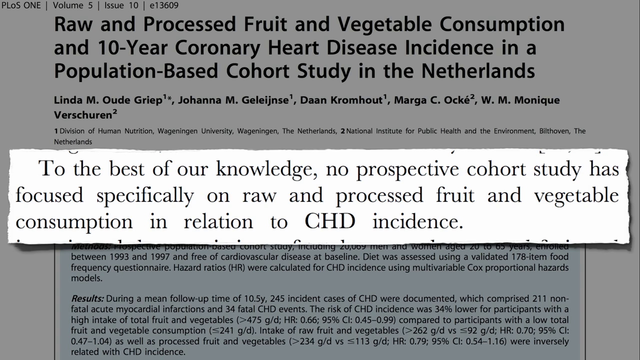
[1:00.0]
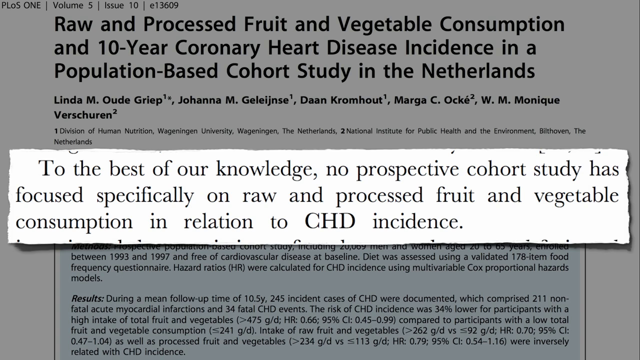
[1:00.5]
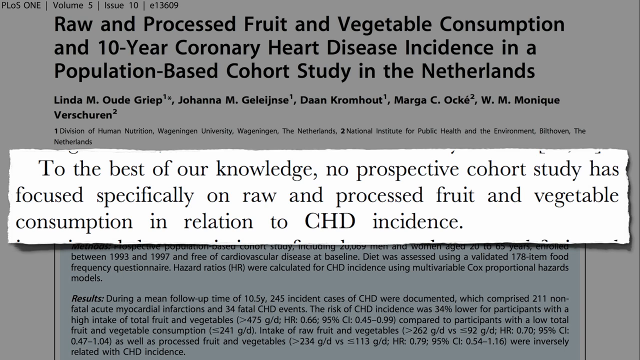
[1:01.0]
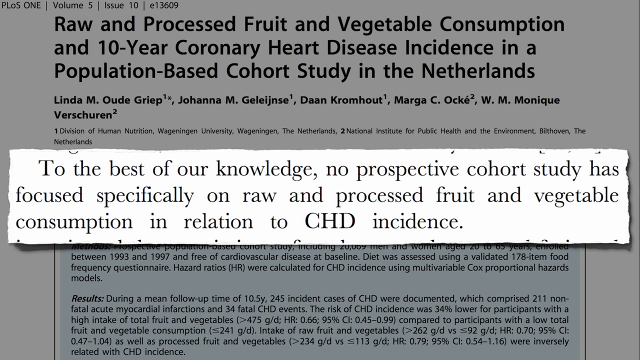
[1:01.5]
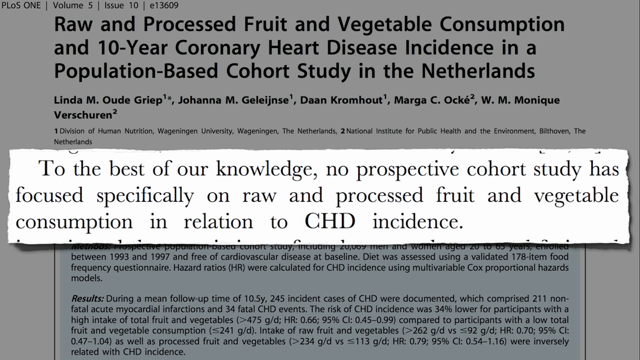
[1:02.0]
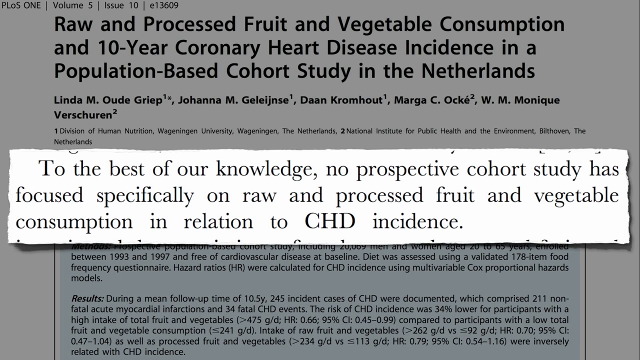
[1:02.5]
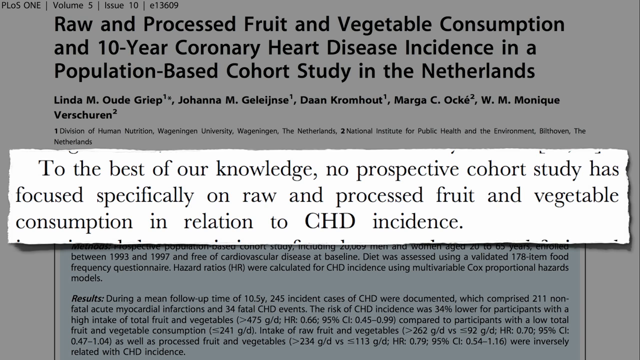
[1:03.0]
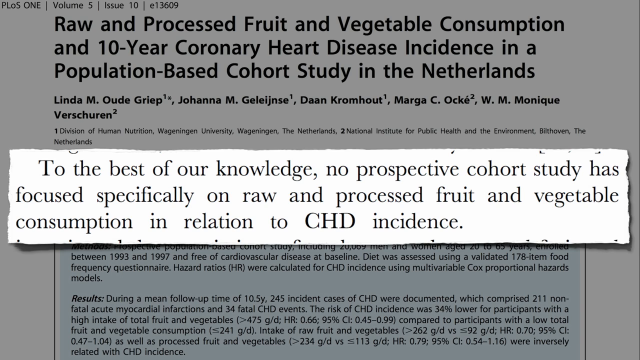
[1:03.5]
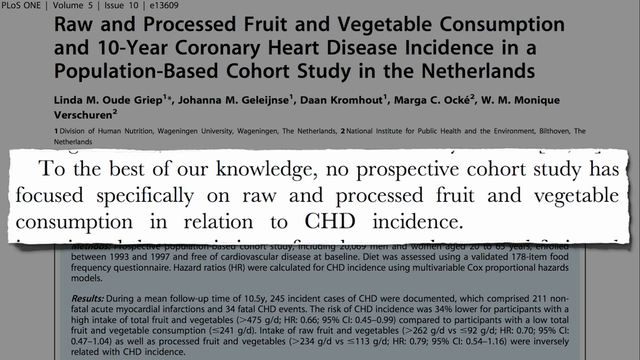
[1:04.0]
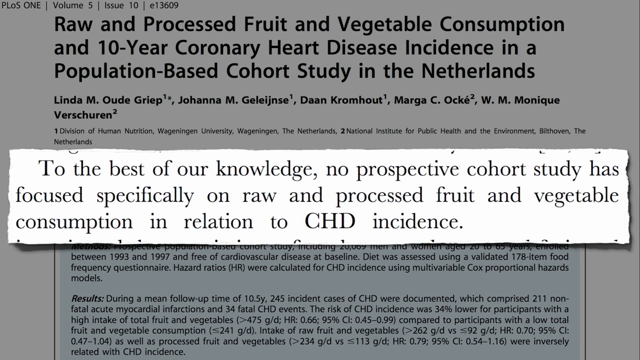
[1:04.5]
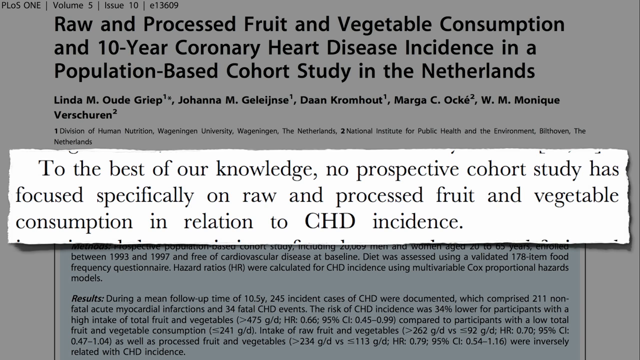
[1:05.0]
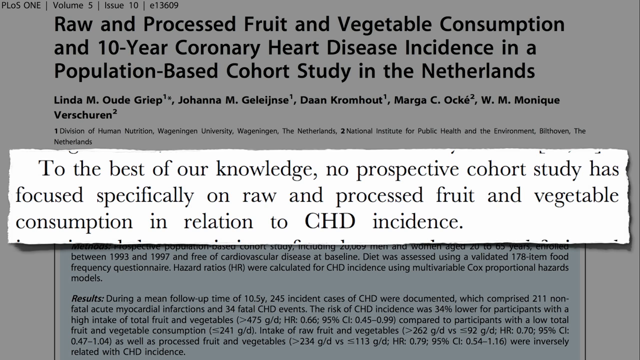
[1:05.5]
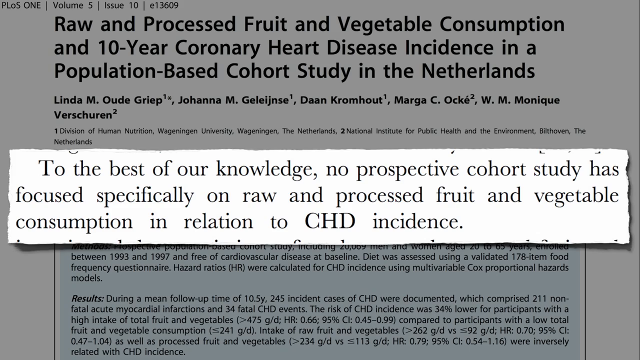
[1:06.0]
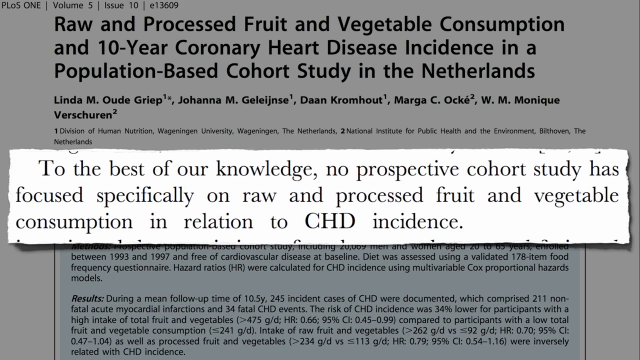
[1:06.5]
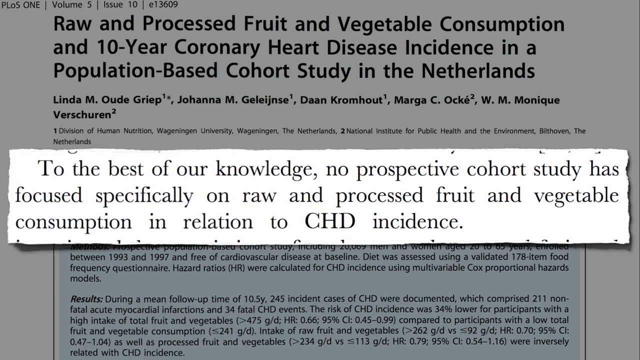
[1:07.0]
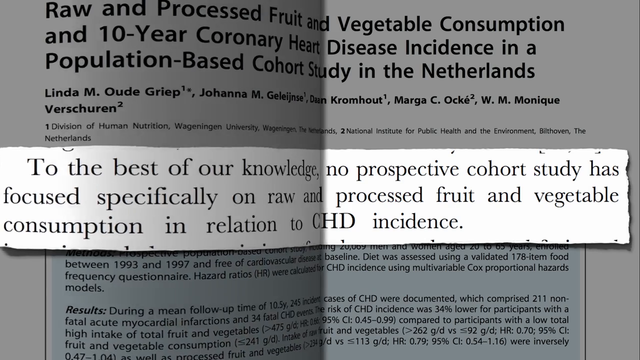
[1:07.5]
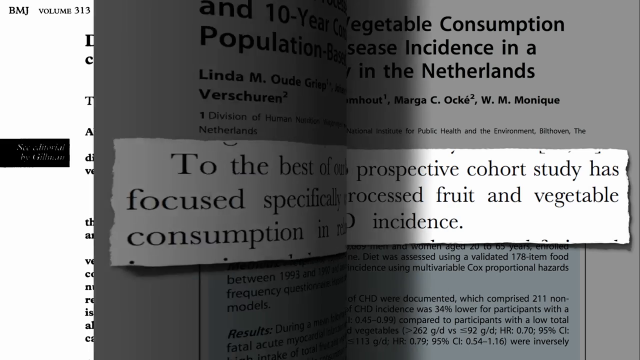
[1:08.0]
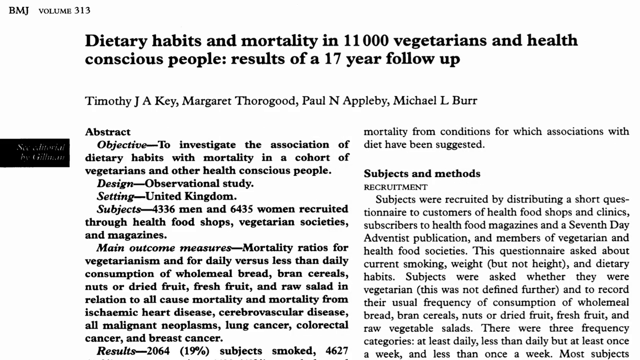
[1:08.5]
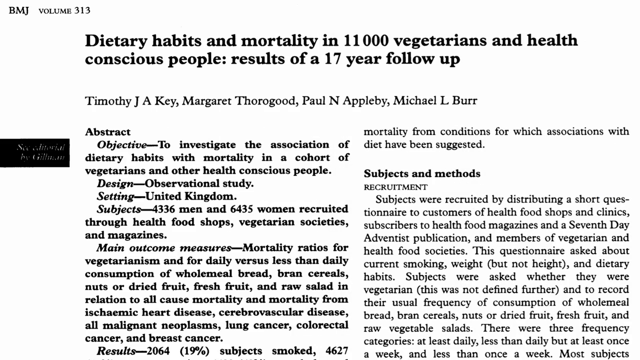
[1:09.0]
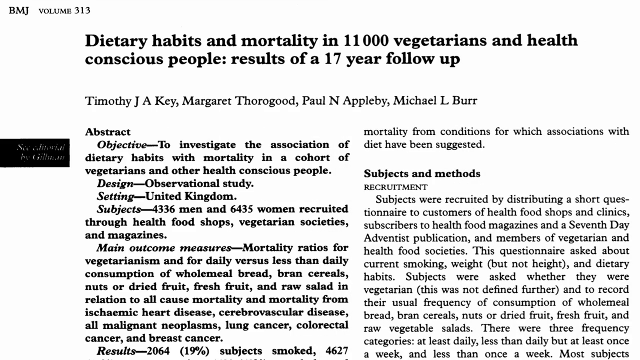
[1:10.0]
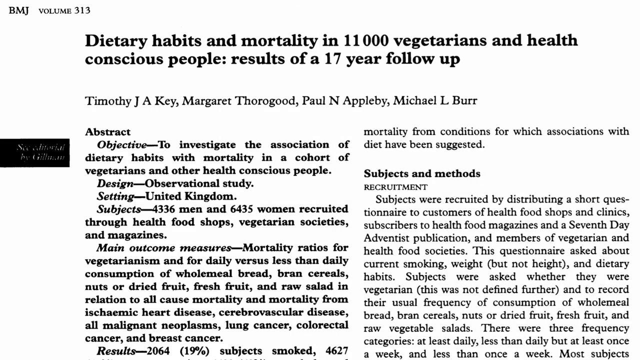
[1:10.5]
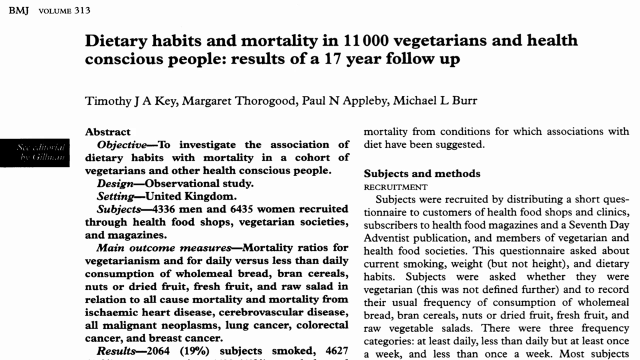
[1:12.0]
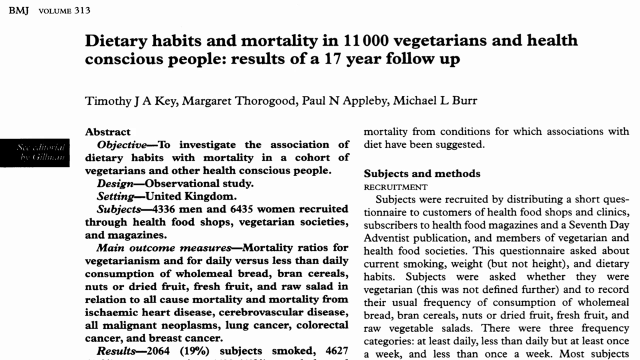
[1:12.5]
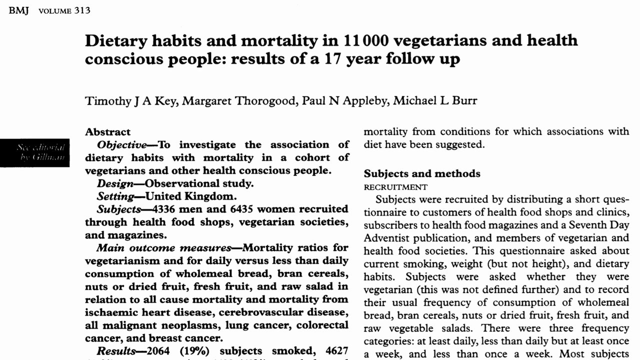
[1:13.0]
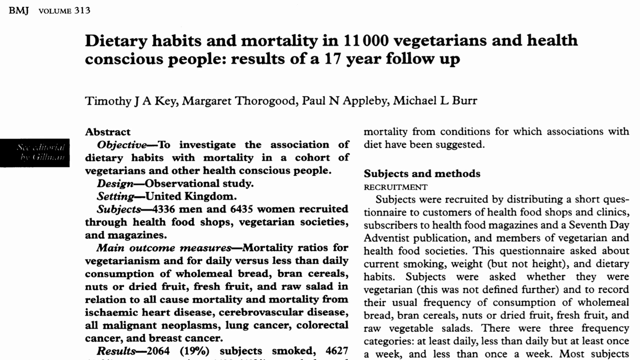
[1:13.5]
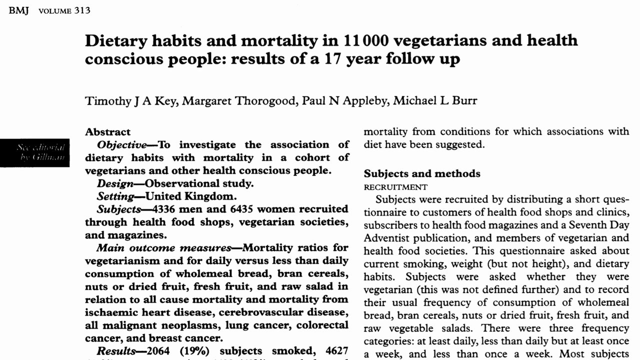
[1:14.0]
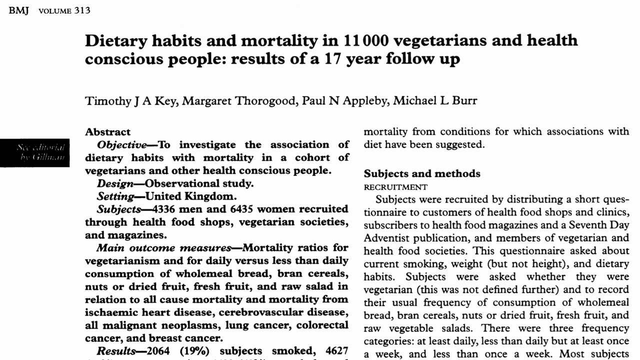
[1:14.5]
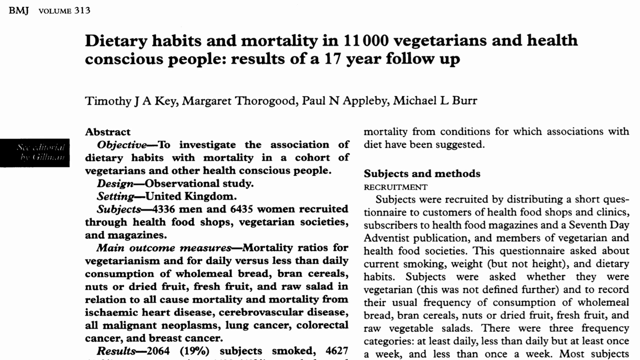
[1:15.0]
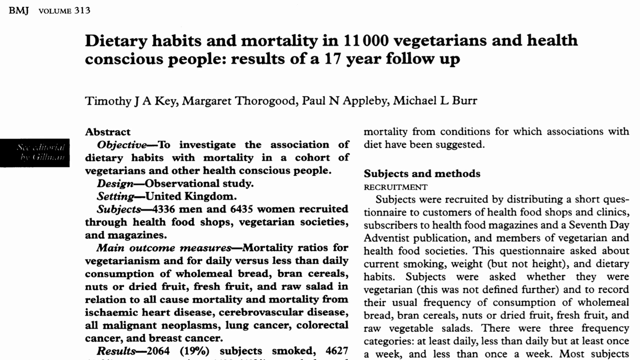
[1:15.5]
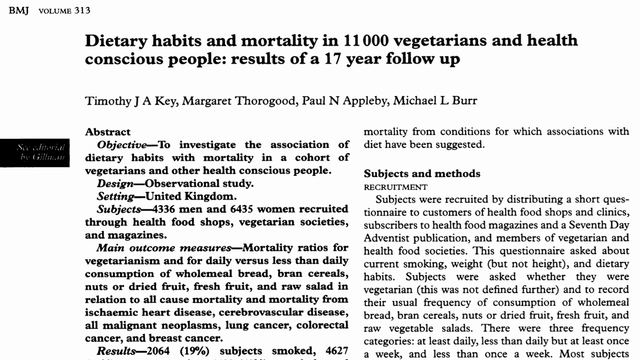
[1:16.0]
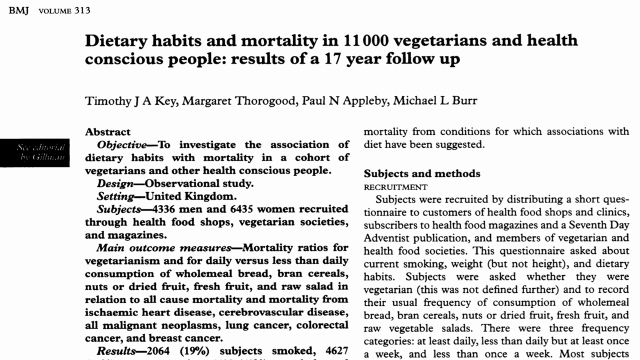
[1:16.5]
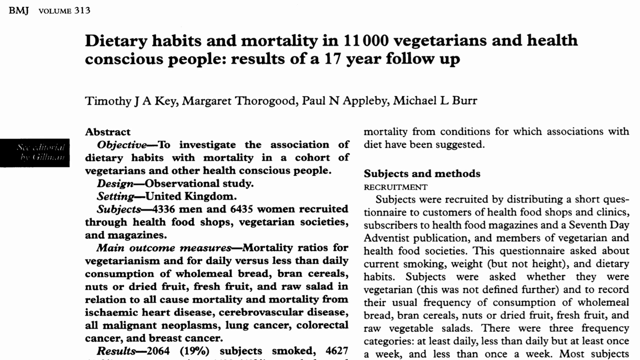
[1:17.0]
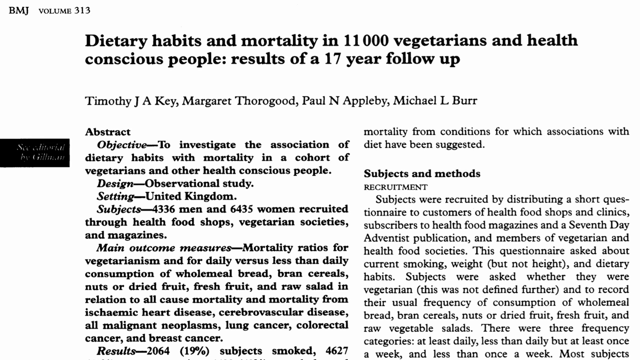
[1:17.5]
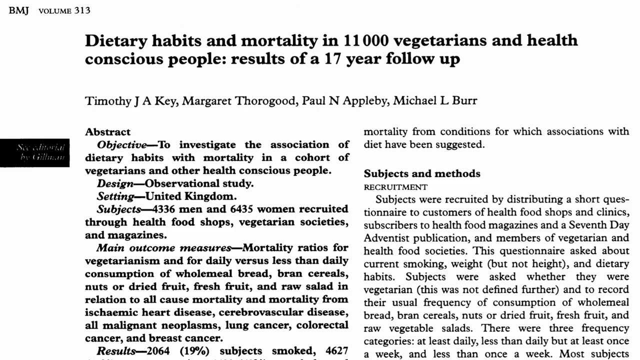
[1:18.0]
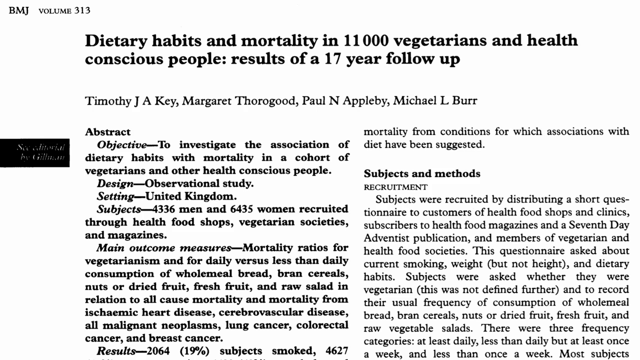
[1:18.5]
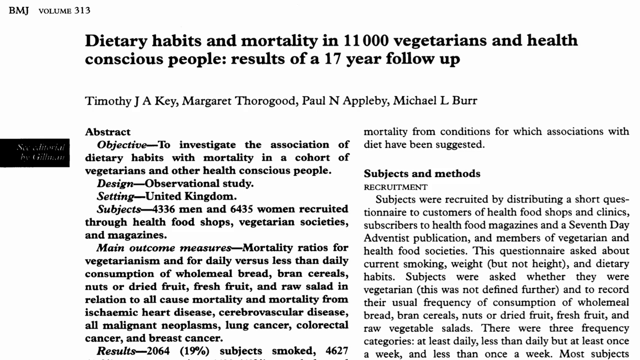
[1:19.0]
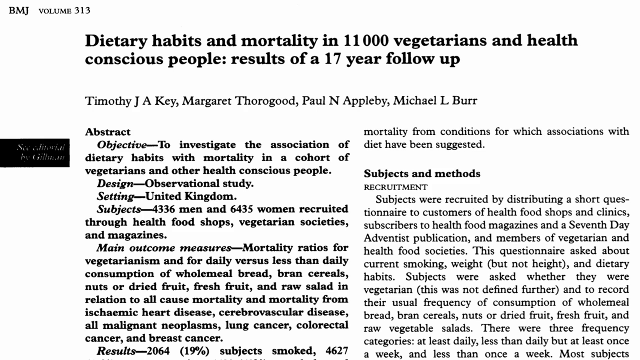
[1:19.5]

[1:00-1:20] The slide for the Netherlands study, "raw and processed fruit and vegetable consumption and 10-year coronary heart disease incidence in a population-based cohort study in the Netherlands," has a white rectangular box on top showing the sentence presented as most important: "to the best of our knowledge, no prospective cohort study has focused specifically on raw and processed fruit and vegetable consumption in relation to CHD incidence." The video then changes to a new slide as though turning the page of a book, but the page turns to the left instead of the right. The new slide reads "dietary habits and mortality in 11,000 vegetarians and health-conscious people, results of a 17-year follow-up." The abstract says "objective to investigate the association of dietary habits with mortality in a cohort of vegetarians and other health-conscious people. Design, observational study, setting, United Kingdom, subjects. 4,336 men and 6,435 women recruited through health food shops, vegetarian societies, and magazines," followed by text about mortality ratios.